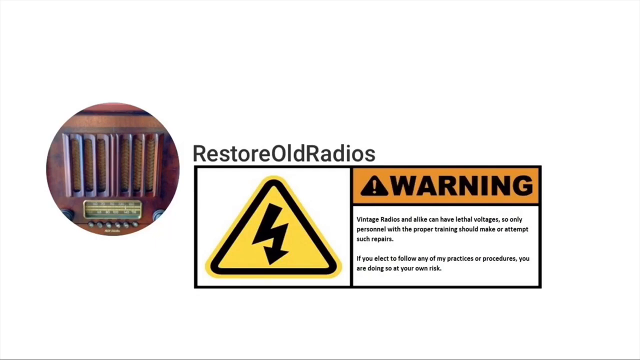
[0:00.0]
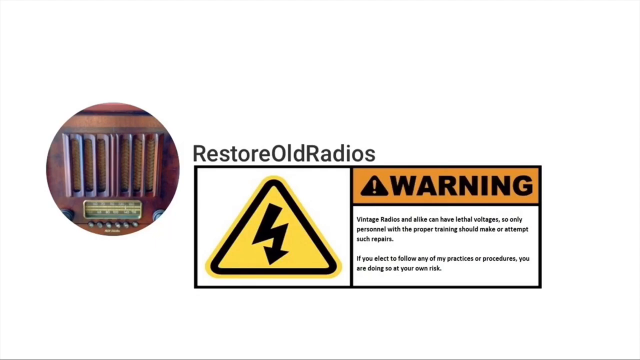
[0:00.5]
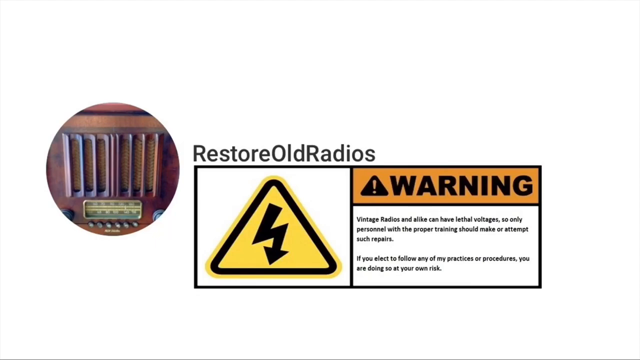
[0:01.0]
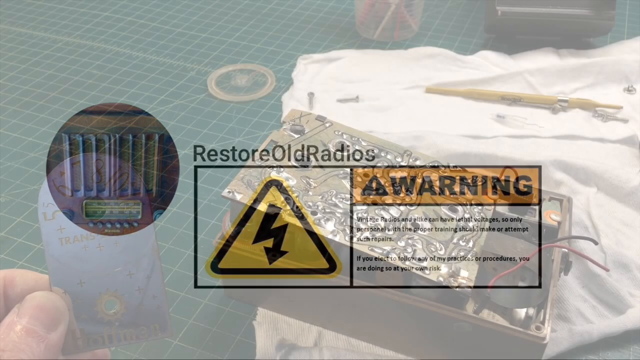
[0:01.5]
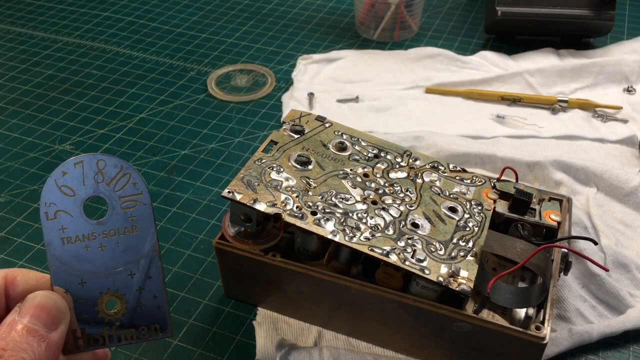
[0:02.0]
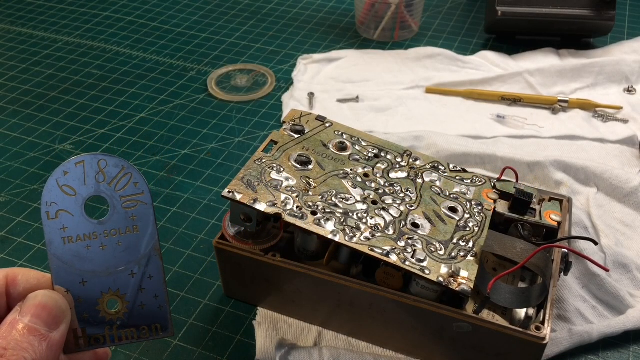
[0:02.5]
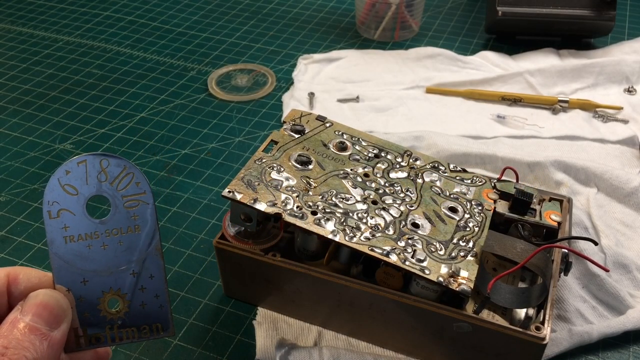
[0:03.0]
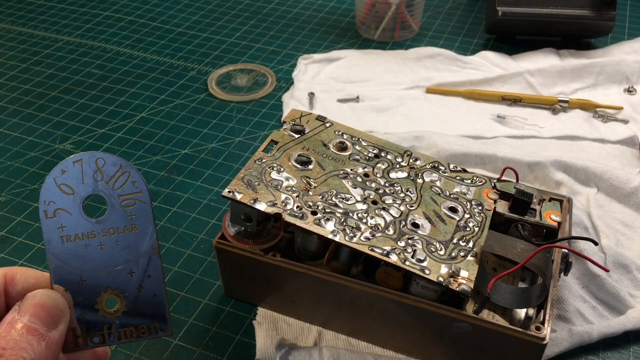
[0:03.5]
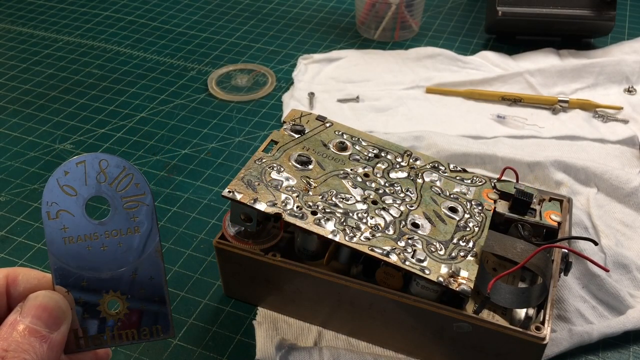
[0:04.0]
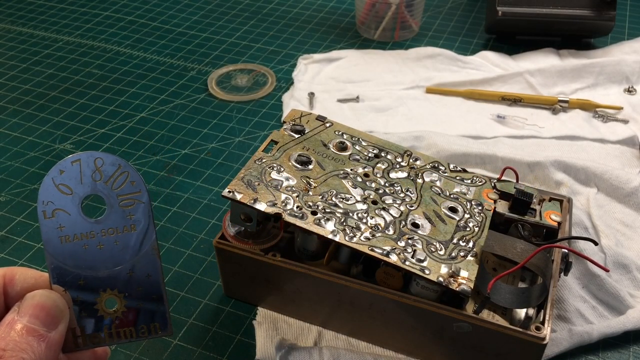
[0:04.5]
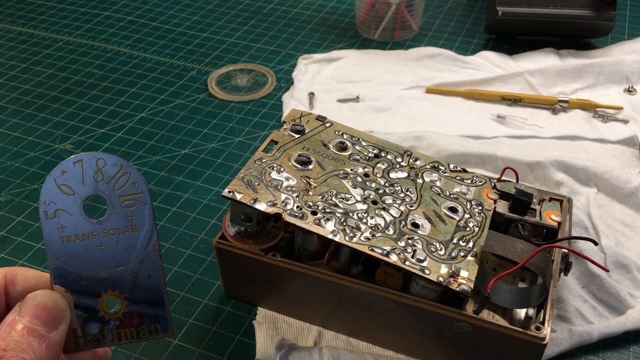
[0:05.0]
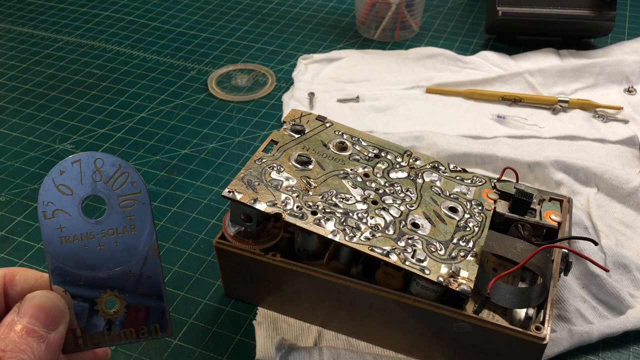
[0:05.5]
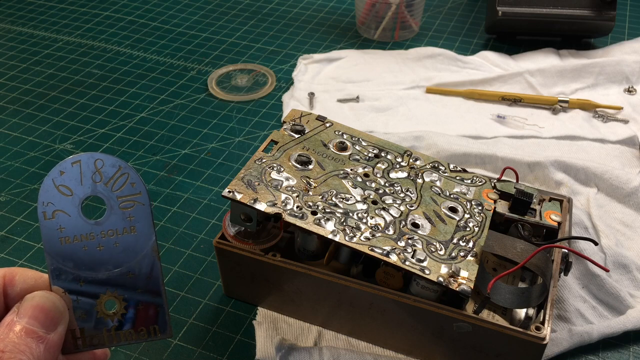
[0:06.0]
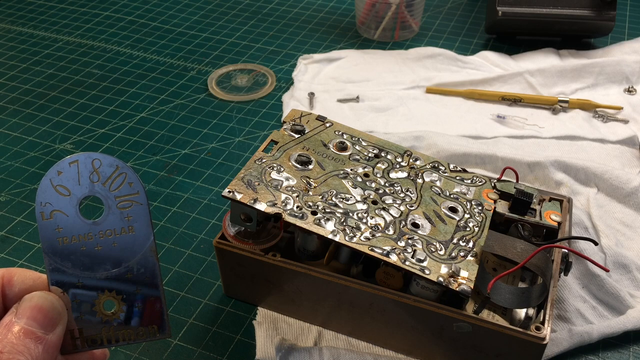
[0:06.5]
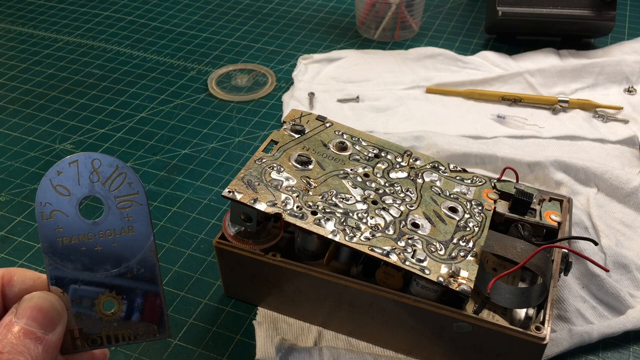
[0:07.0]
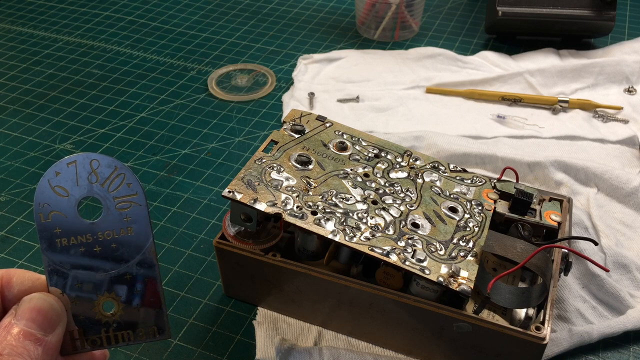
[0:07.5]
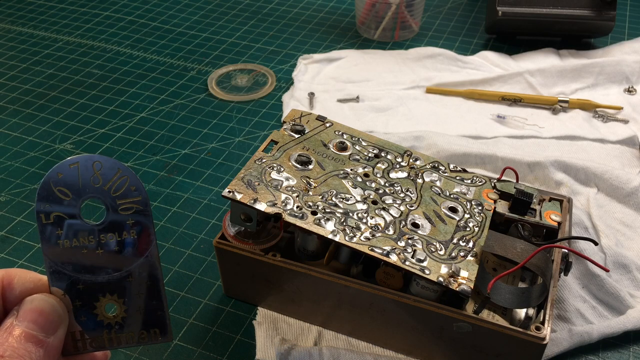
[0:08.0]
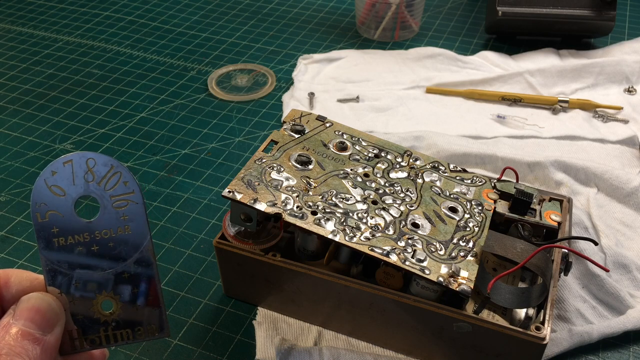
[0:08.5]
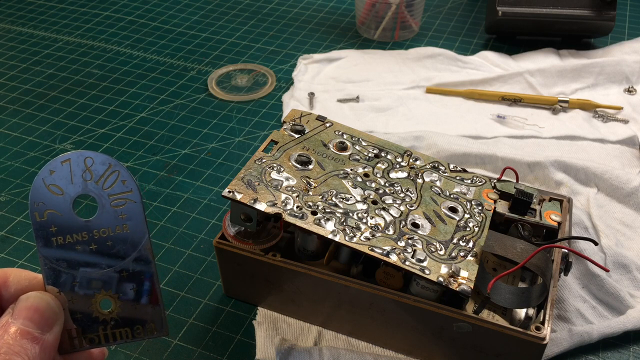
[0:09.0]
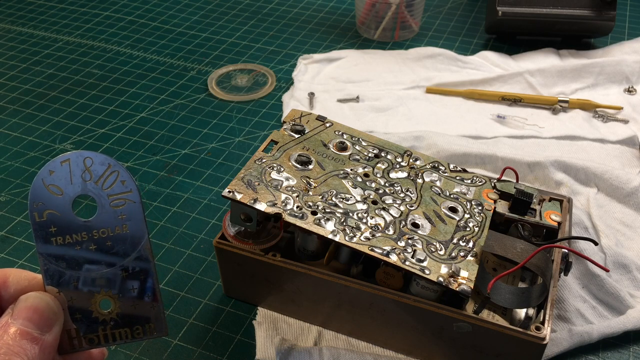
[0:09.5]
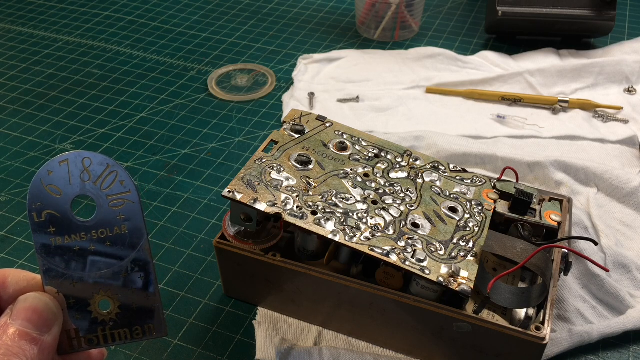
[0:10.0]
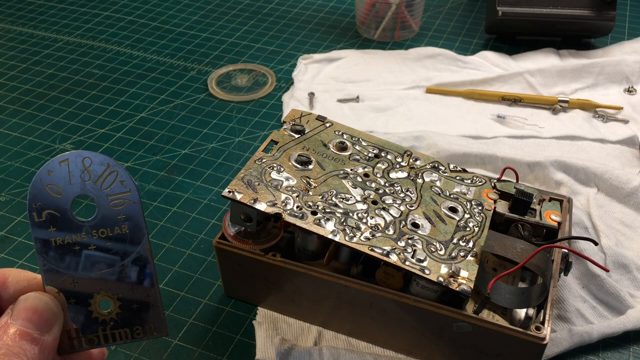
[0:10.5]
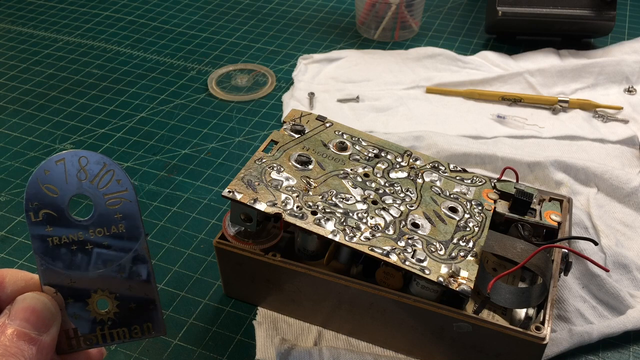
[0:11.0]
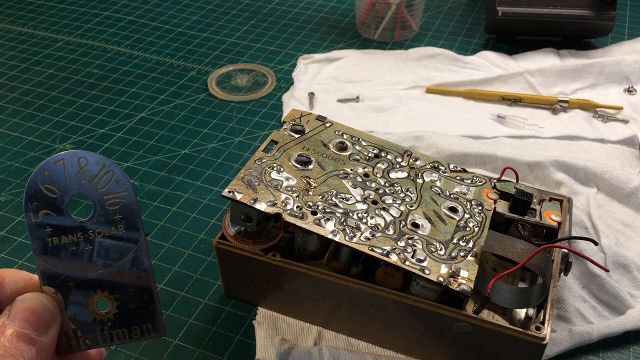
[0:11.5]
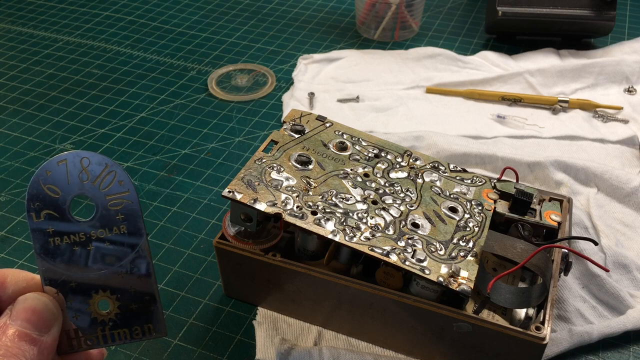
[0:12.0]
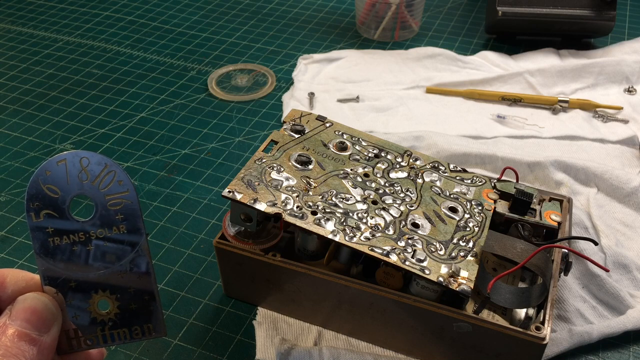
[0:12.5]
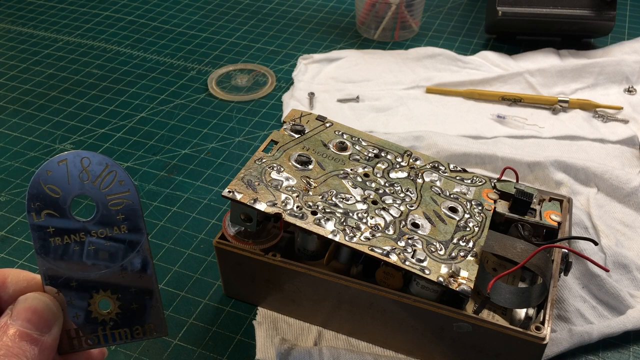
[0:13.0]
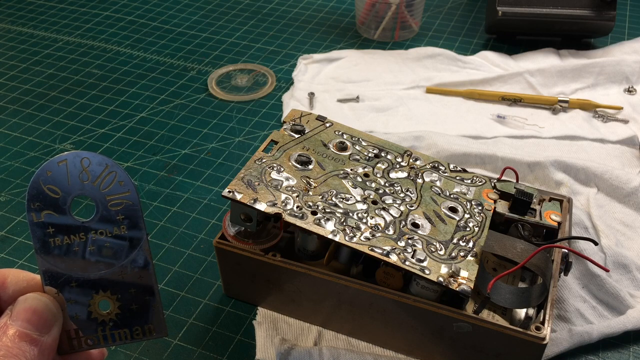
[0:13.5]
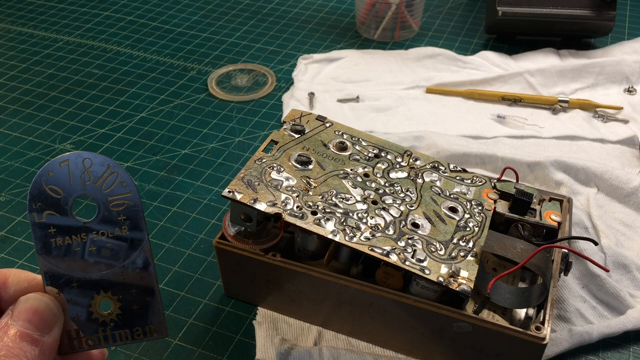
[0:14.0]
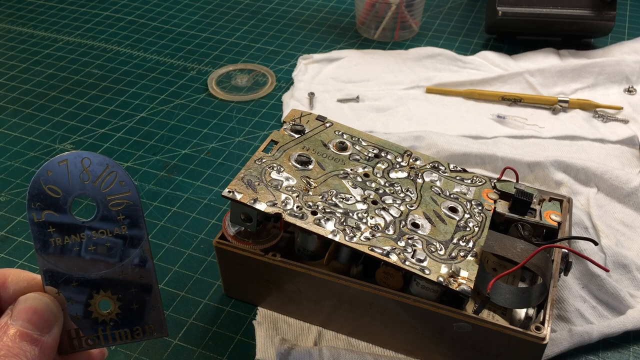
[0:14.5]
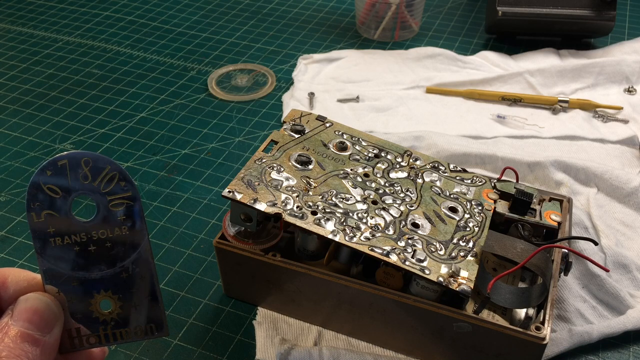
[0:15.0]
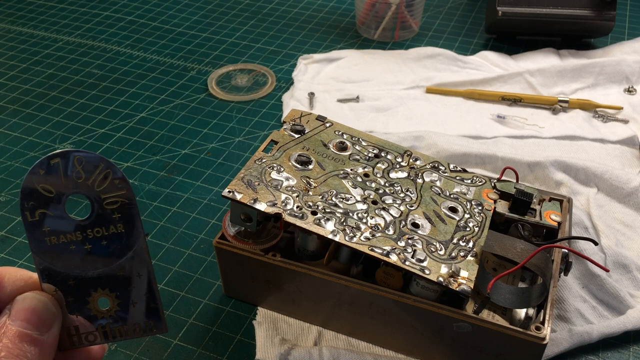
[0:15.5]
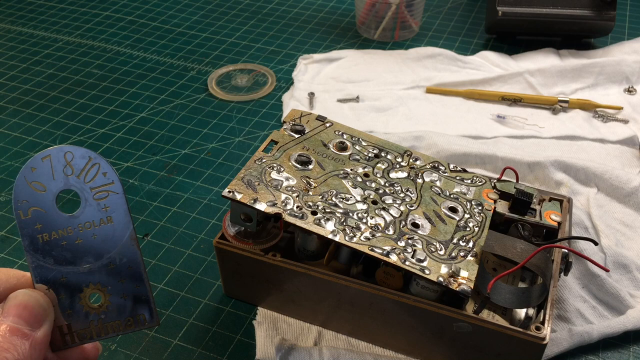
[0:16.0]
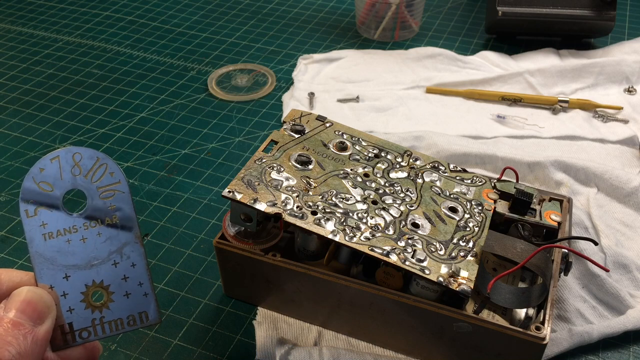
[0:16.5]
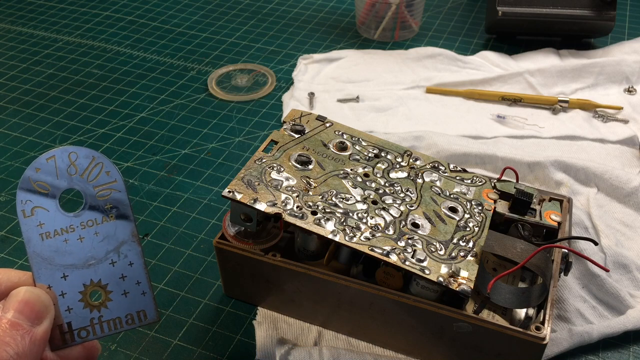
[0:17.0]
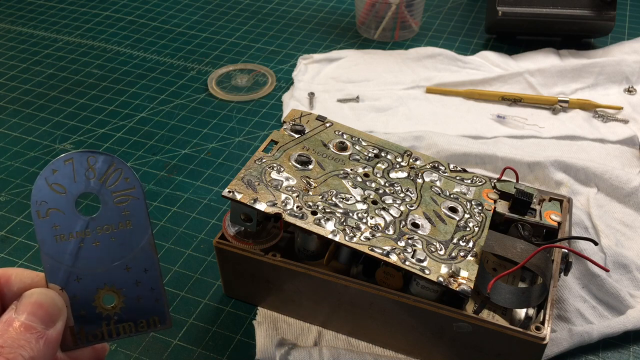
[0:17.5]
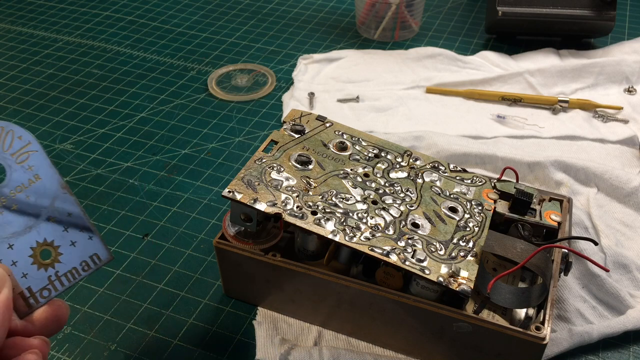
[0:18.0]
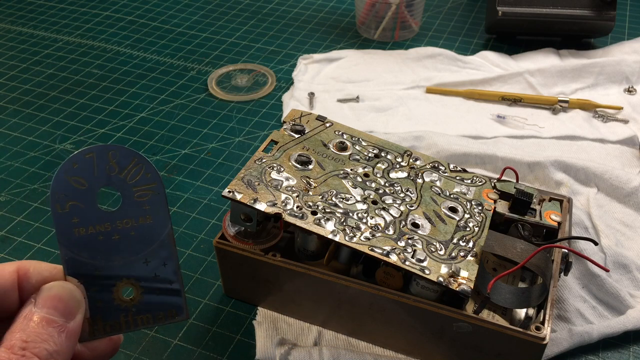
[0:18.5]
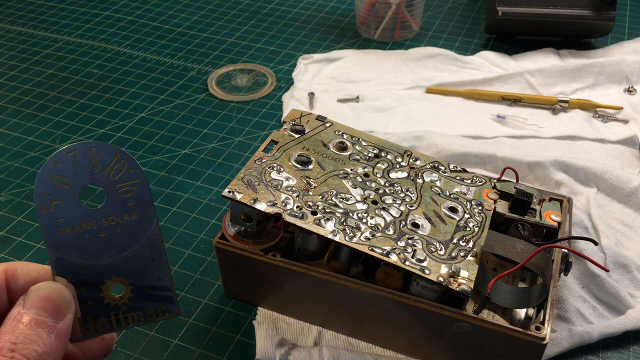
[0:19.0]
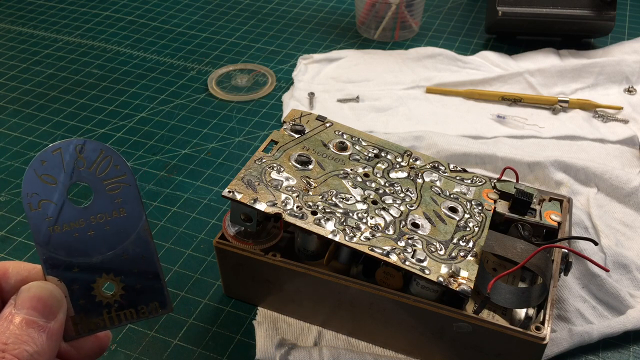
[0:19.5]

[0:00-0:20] A screen shows a warning sign and black text about restoring radios. The scene then switches to an old machine in the middle of the frame. In the lower left, part of a human hand holds something unclear, some kind of metal, and he keeps holding it throughout this section. He makes gestures with his hand, possibly talking about something or preparing the old machine in the middle of the screen. In the background are a white sheet and a green blackboard with things placed on it, possibly including a pencil. After a cut the scene does not really change; the man just keeps holding the metal sheet.